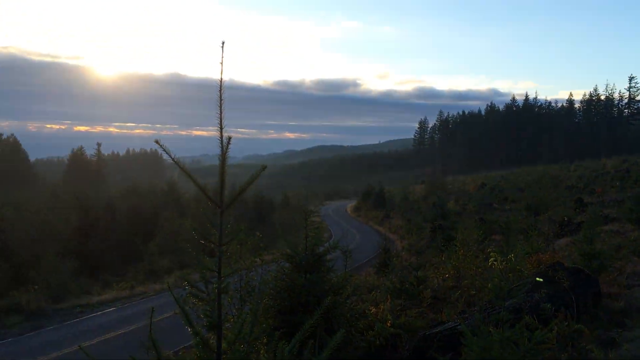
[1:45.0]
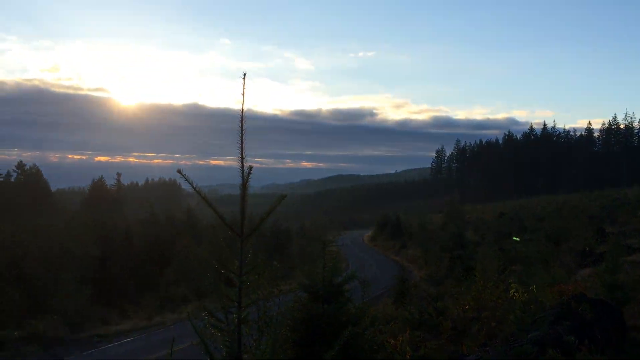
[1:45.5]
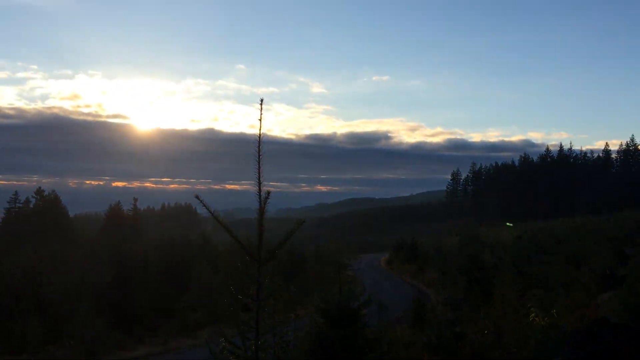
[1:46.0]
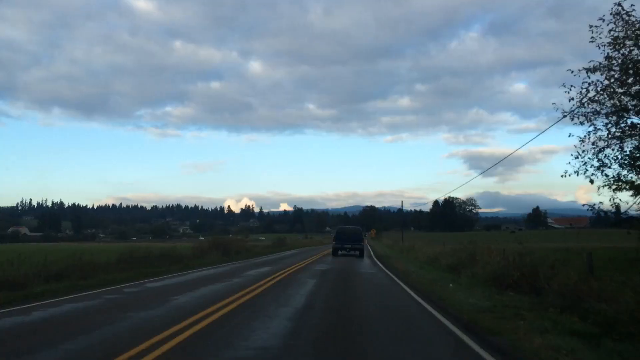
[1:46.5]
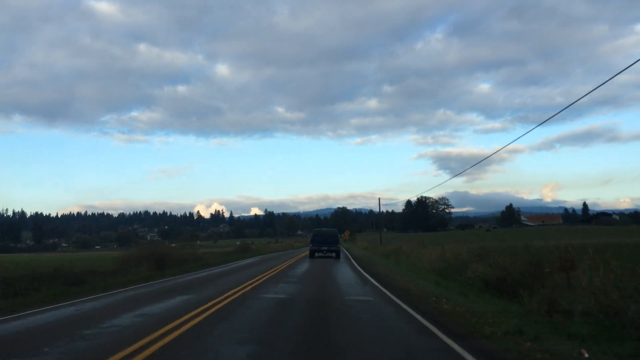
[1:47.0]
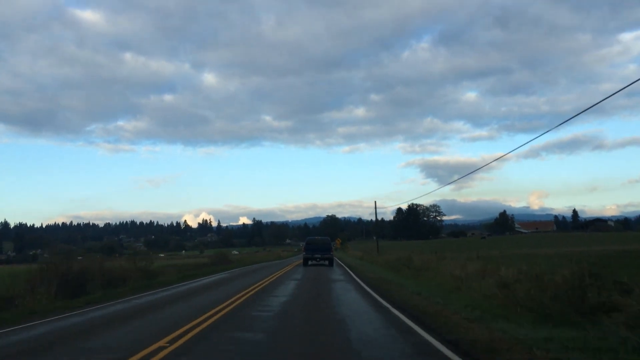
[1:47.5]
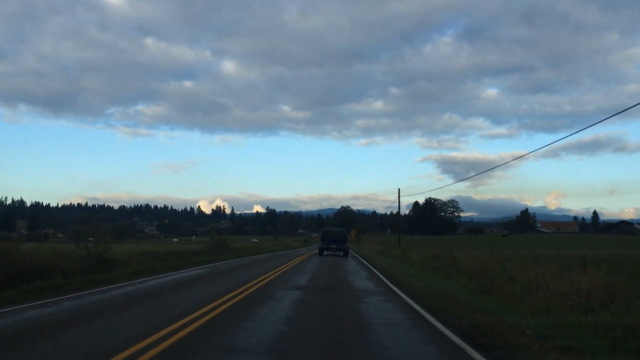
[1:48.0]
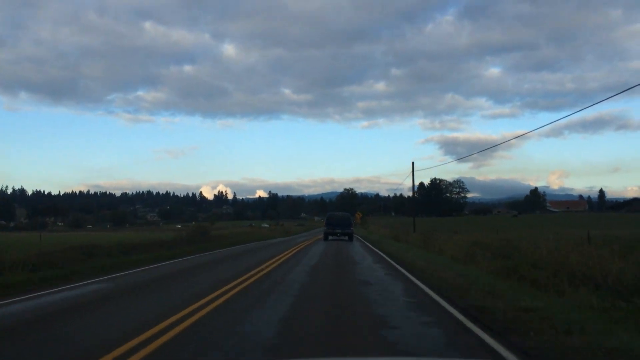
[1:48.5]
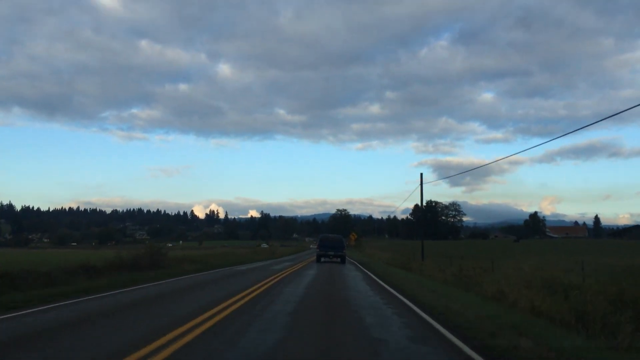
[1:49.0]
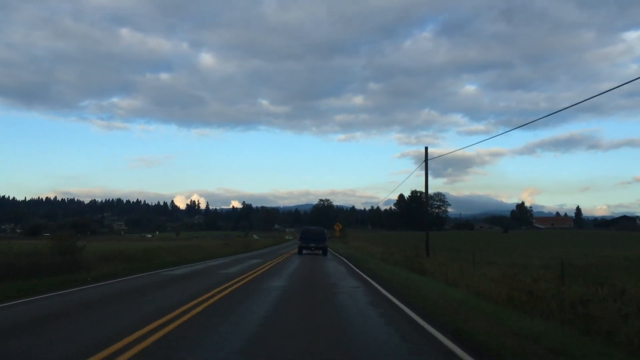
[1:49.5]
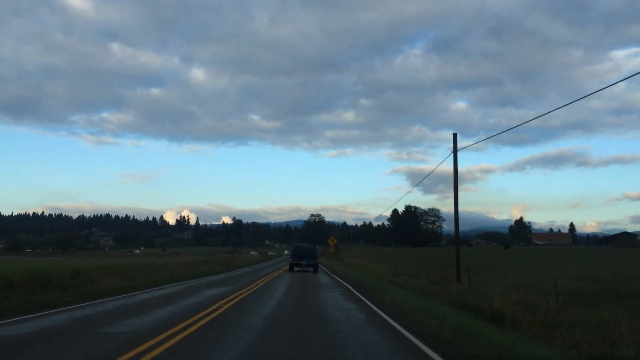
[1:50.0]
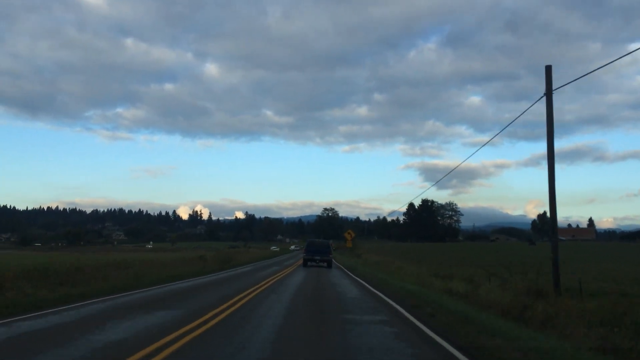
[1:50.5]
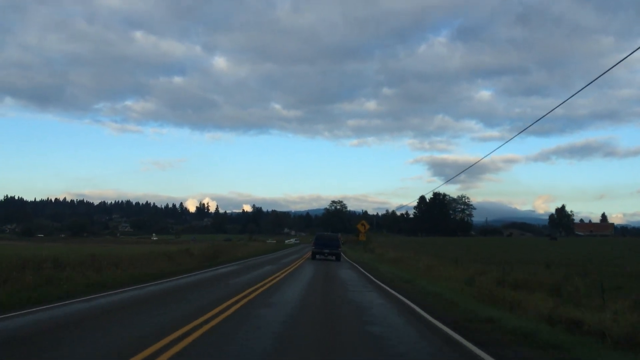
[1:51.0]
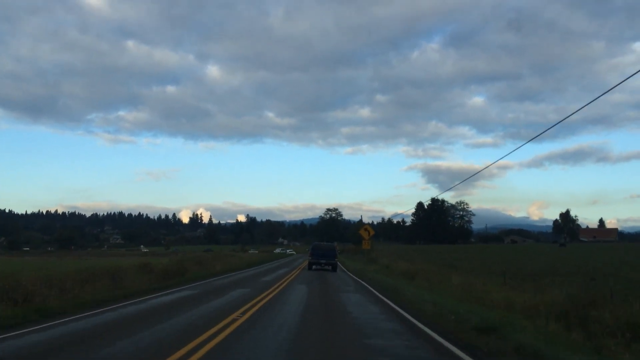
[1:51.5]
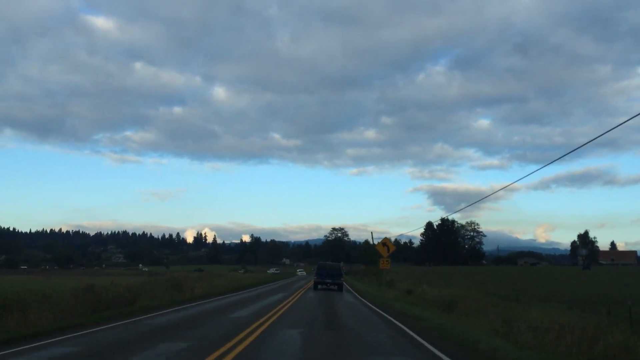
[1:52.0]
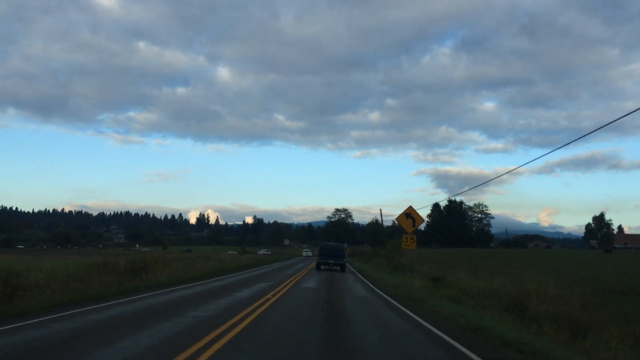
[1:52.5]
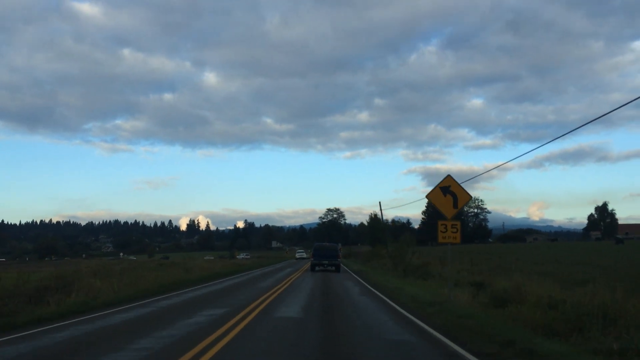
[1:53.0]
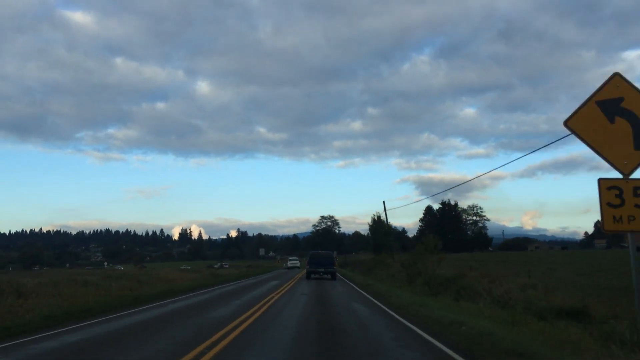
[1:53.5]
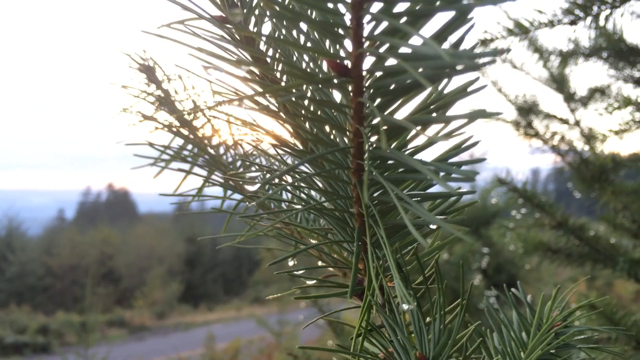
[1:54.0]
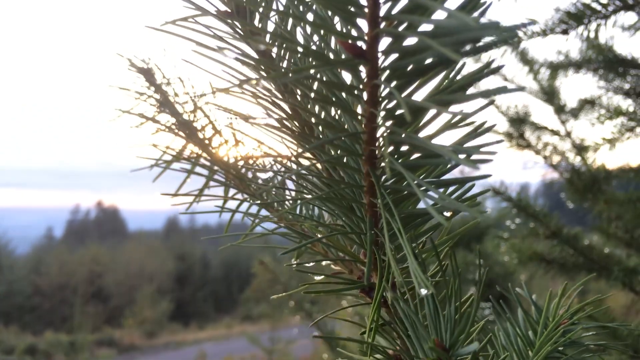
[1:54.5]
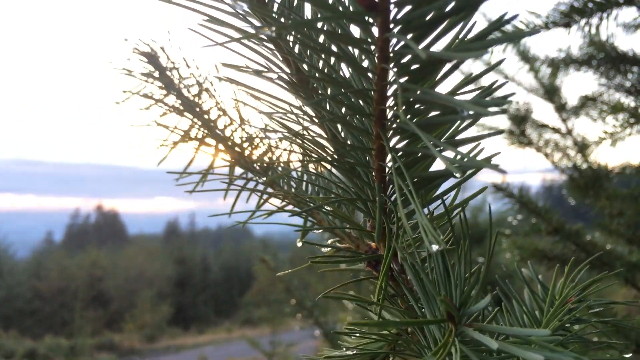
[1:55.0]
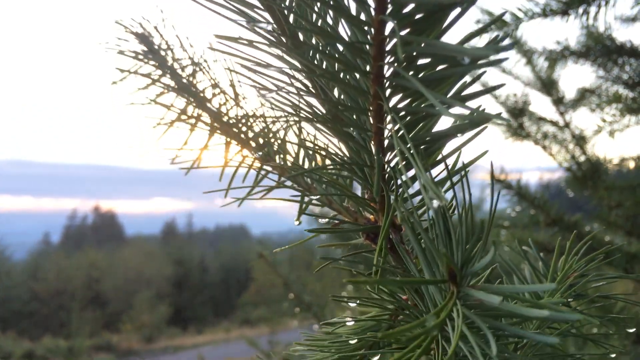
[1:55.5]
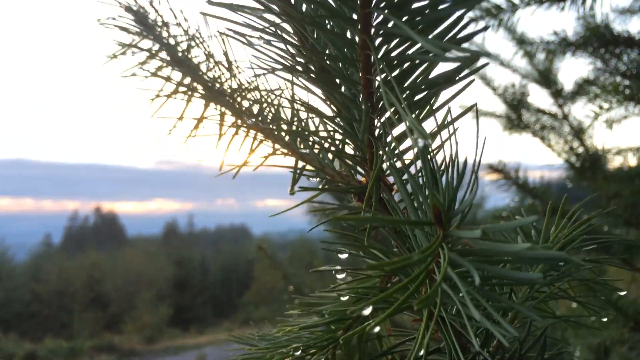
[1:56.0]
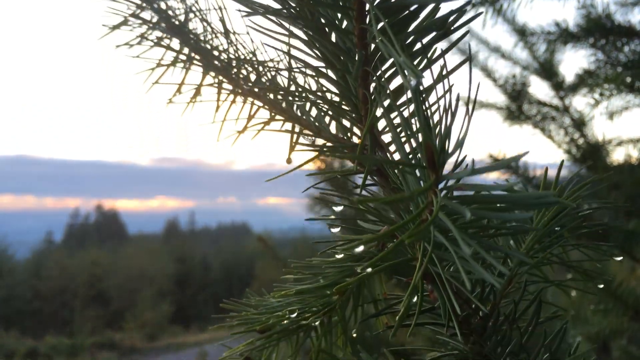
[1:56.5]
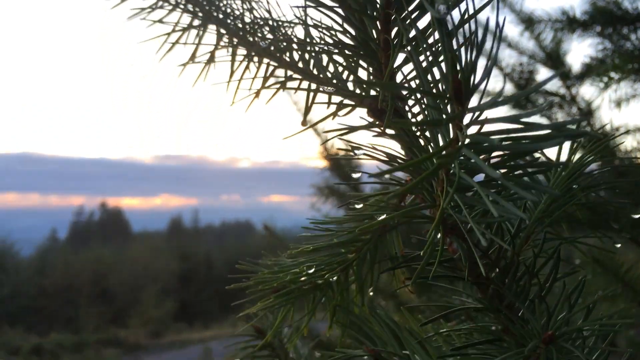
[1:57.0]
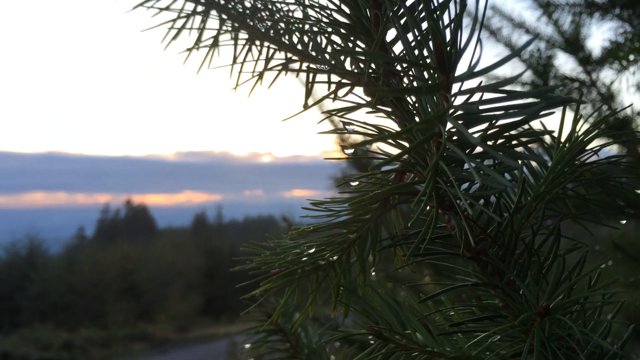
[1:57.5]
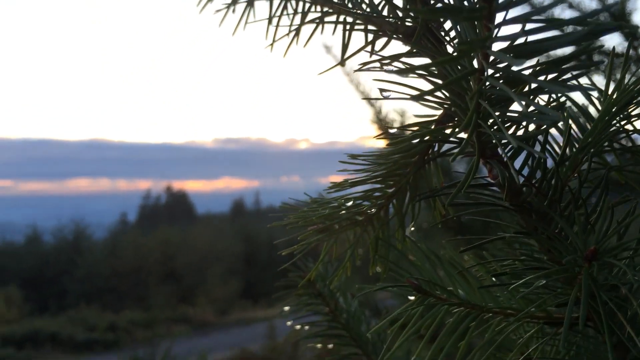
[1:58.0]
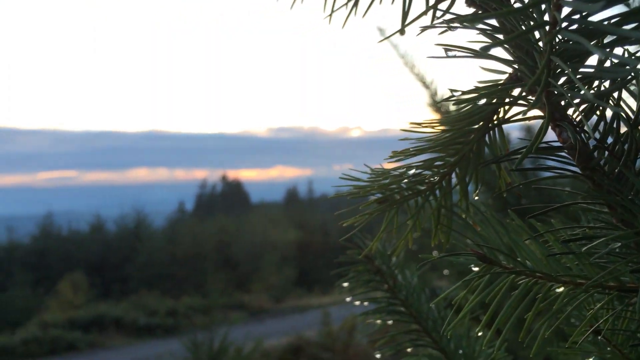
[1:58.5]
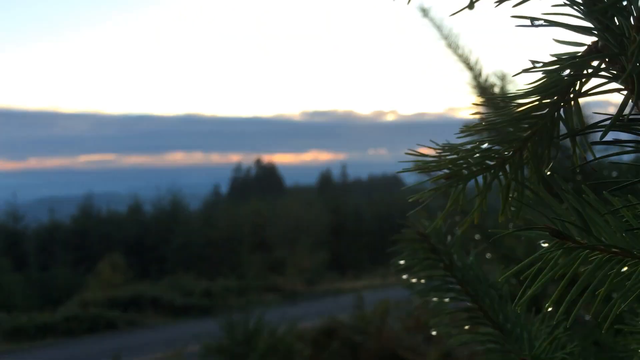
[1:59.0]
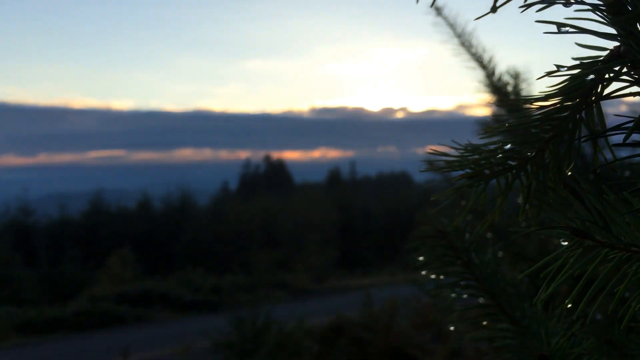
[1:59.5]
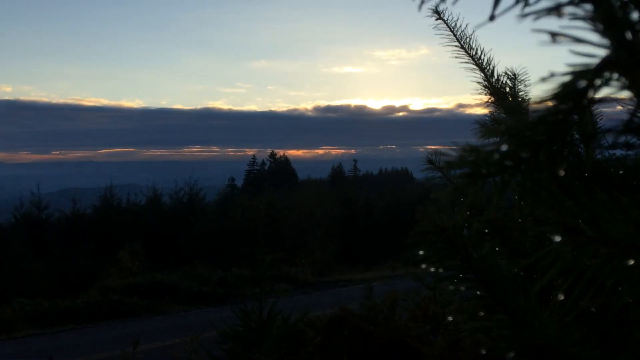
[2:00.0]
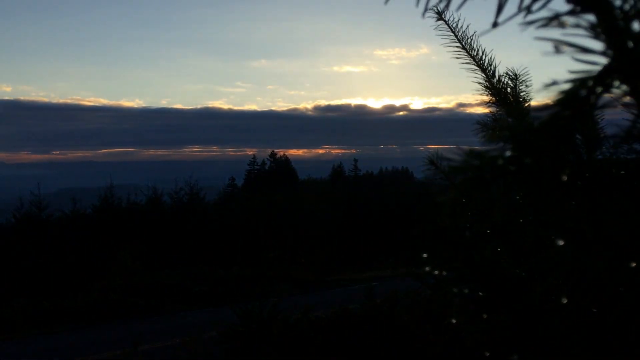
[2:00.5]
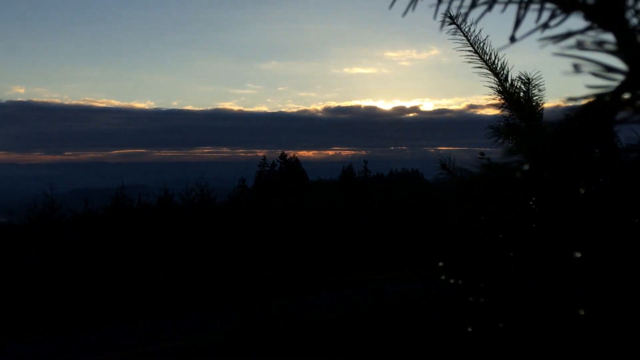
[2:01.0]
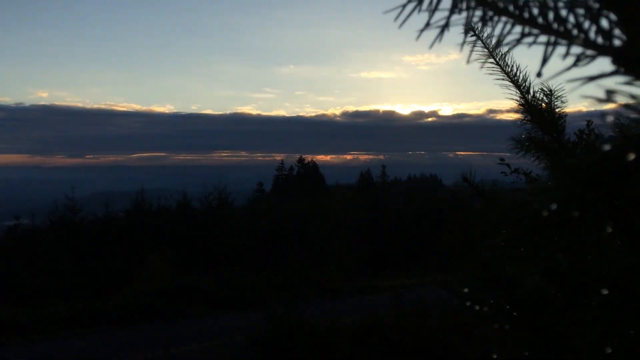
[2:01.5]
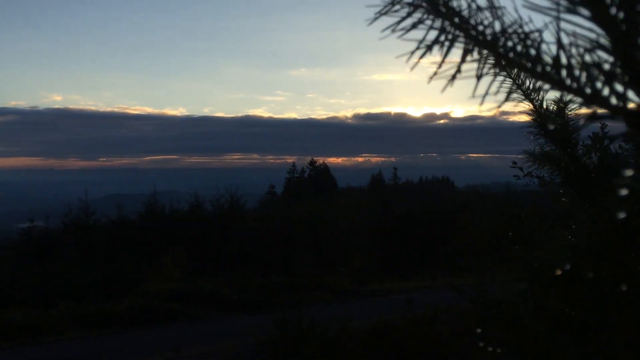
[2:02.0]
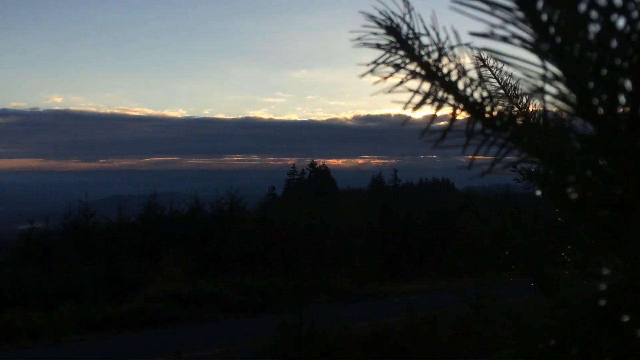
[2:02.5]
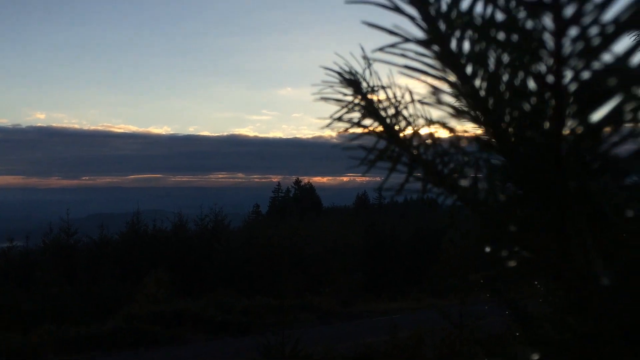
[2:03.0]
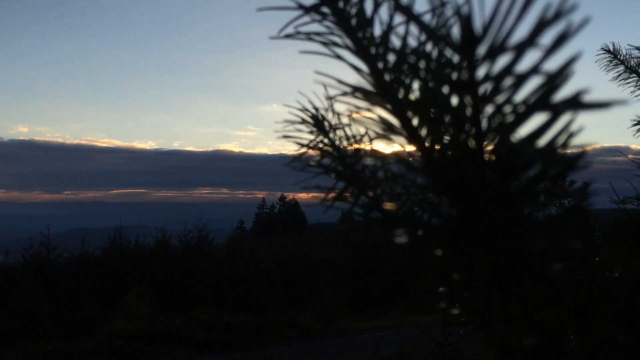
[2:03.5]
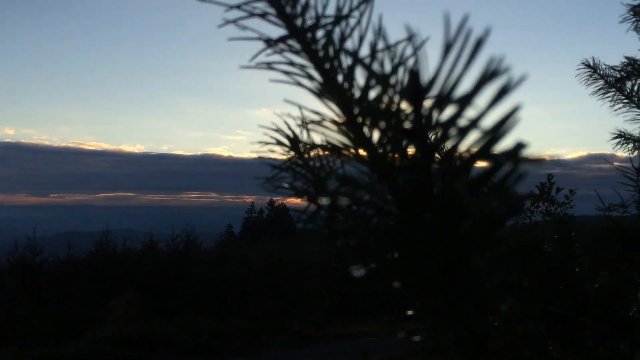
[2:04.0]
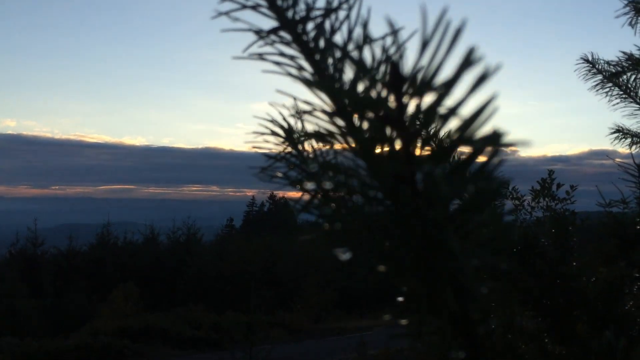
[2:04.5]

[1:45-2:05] The video cuts to a car driving on the road behind a black Jeep, with a white car coming in the other direction. It cuts to a close-up of foliage with dew on it, a little bit of water, and then to the landscape of the wooded area along the highway with a large distance and a big sky behind. It cuts back to the car coming down the road, with other white cars in the distance driving in the opposite direction. Then it cuts to the close-up of the dewy tree, with the gray highway below it; the camera zooms out and the light saturation is a little weakened. To the right there is a lot of grass on both sides and some foliage in the distance. Back on the dewy tree, another small green bush stretches out right behind it in the top right corner of the frame. The camera moves around and pans, then the video jumps back to the car following the black Jeep.